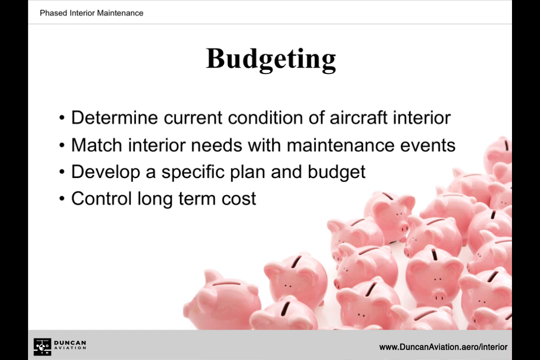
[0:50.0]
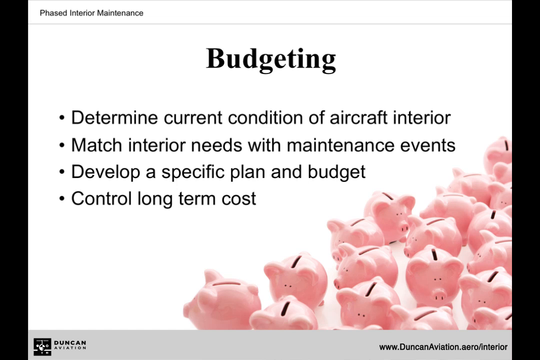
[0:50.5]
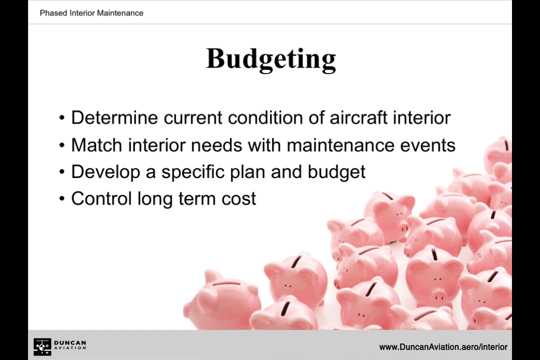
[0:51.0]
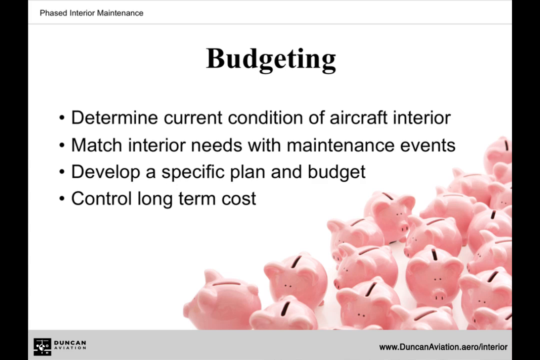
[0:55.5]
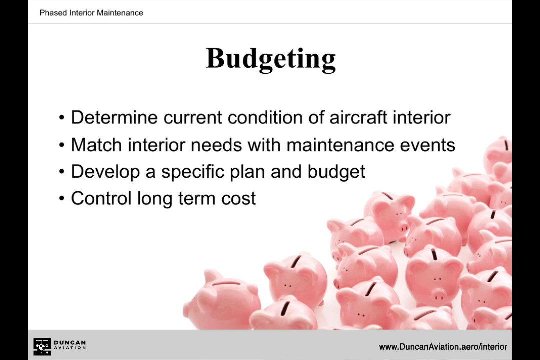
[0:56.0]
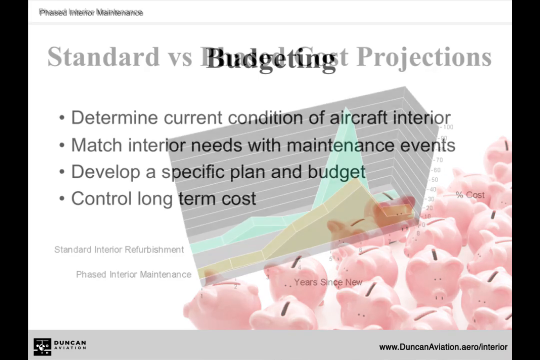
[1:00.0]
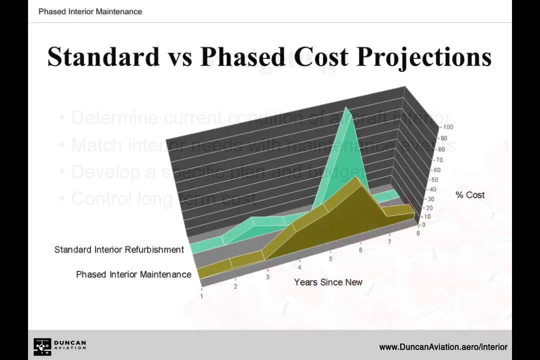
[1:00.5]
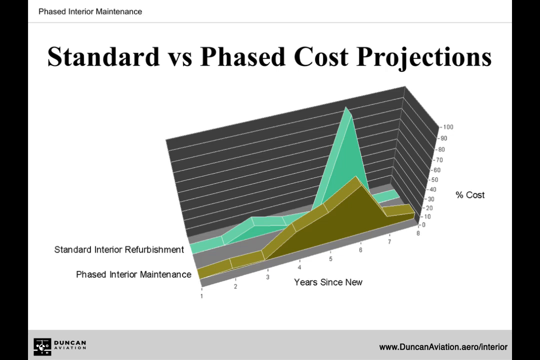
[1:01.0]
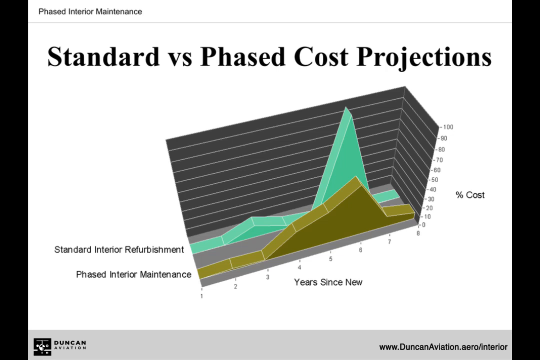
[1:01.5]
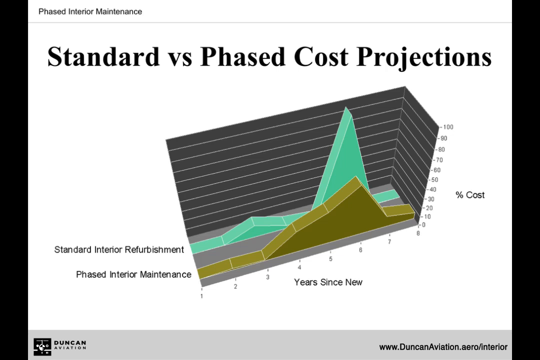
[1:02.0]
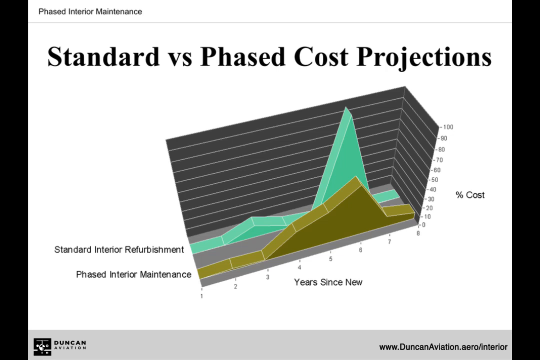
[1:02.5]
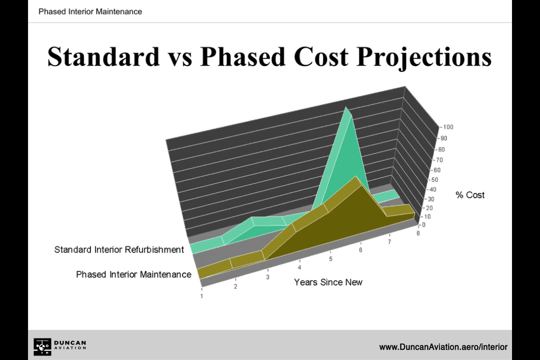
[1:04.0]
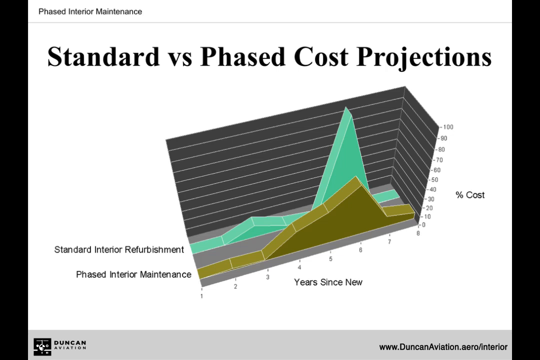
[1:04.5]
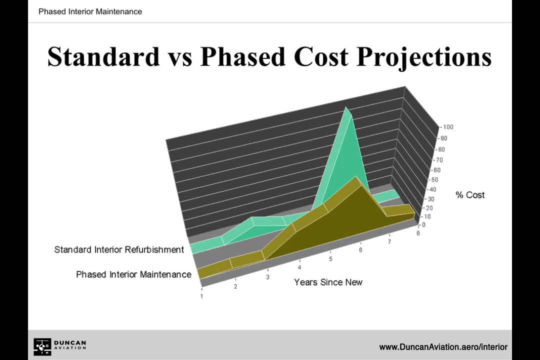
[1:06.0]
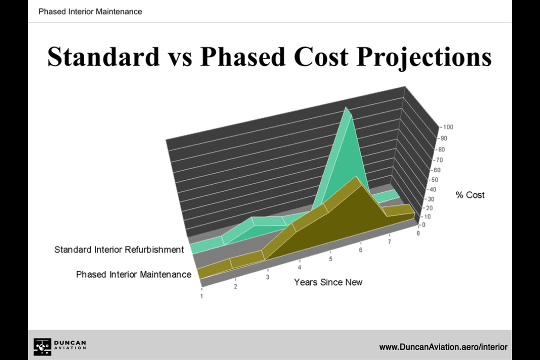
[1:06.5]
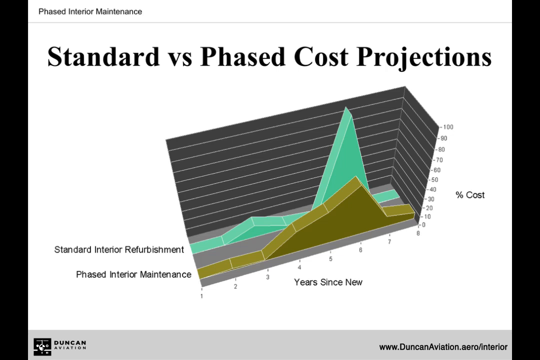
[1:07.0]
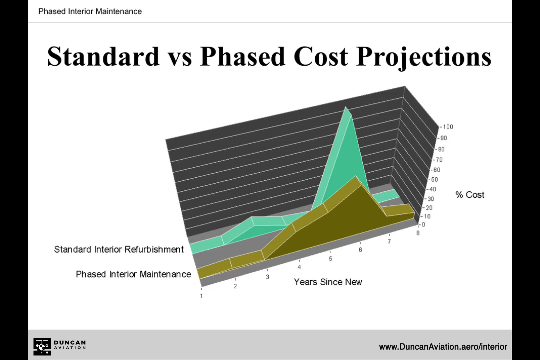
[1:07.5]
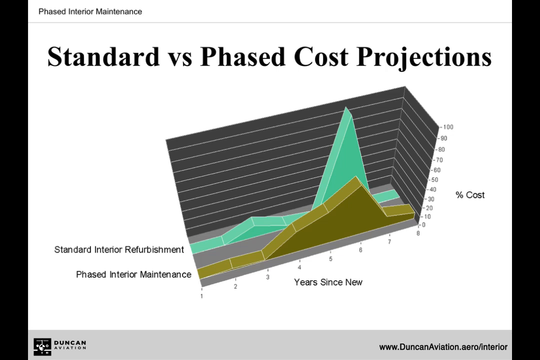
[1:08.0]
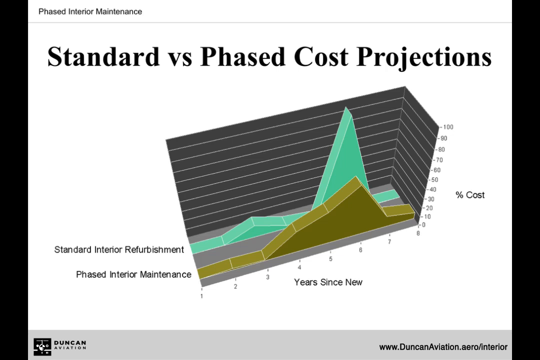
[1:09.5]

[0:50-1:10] A page has the title "budgeting" in the middle in black bold print on a white background, with four bullet points also in the middle: "determine current condition of aircraft interior," "match interior needs with maintenance events," "develop a special plan and budget" and "control long-term cost." A whole bunch of small piggy banks are in the area, all pink, each with a dark slit where money could go. The next page then comes up, reading "standard versus phased cost projections." It has a graph with a gray background with lines and shapes drawn almost like mountains, in a light green color and a yellowish green color. The words "standard interior refurbishment" and "phased interior maintenance" appear, and along the bottom it says "year since new," running from one up to eight. The percentage of the cost starts at zero percent and goes in increments of 10 up to 100. A website is in the lower right-hand corner.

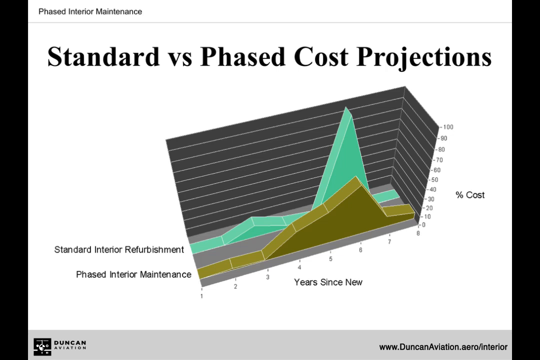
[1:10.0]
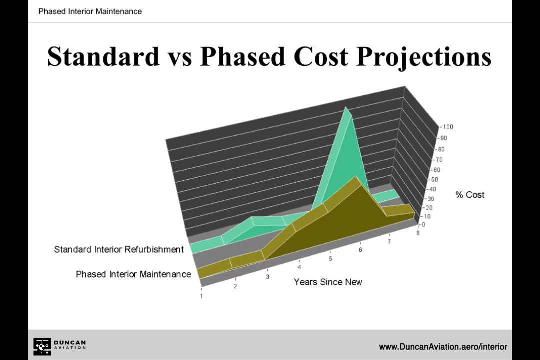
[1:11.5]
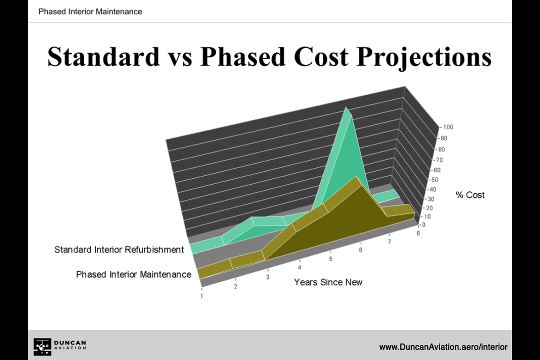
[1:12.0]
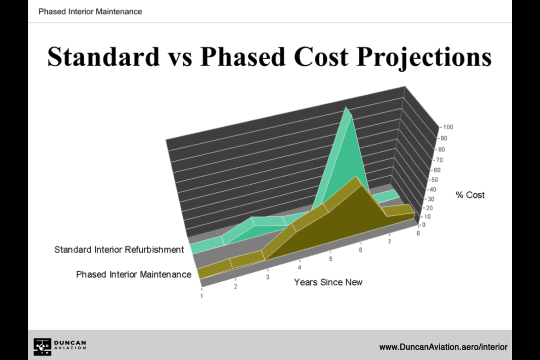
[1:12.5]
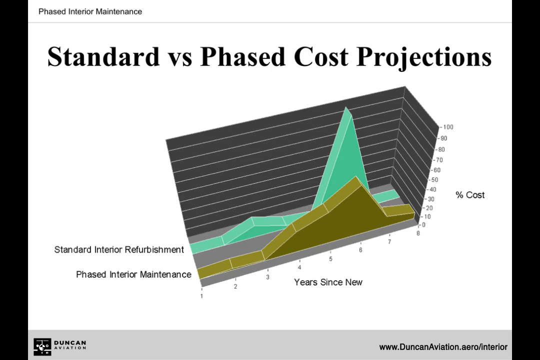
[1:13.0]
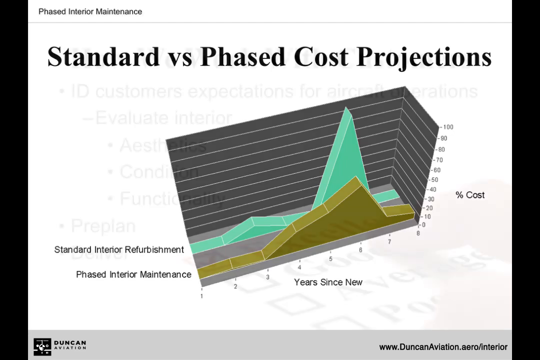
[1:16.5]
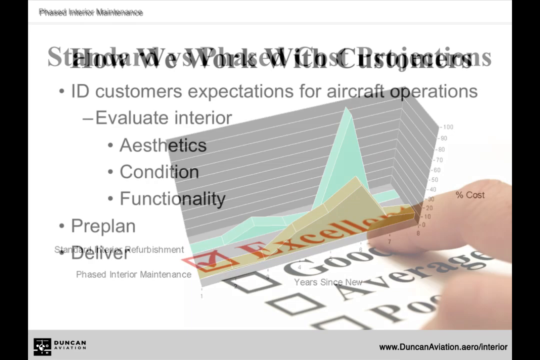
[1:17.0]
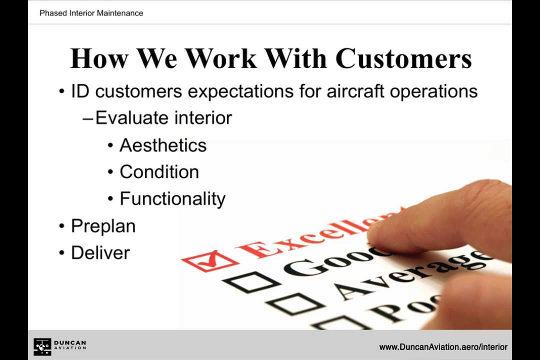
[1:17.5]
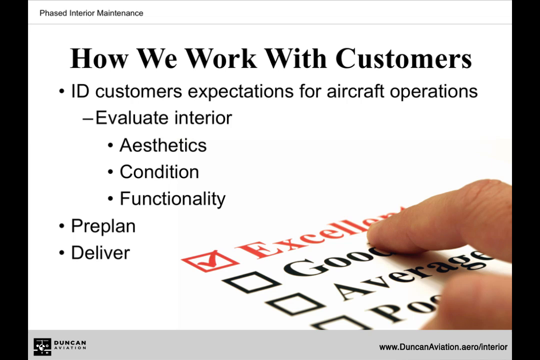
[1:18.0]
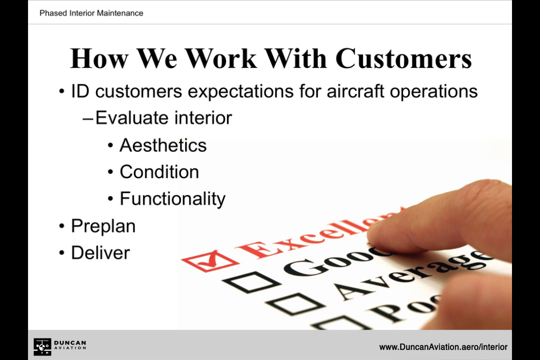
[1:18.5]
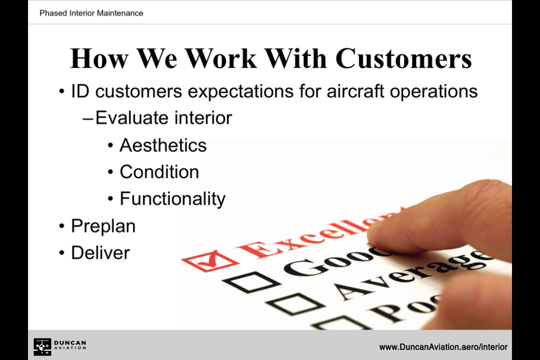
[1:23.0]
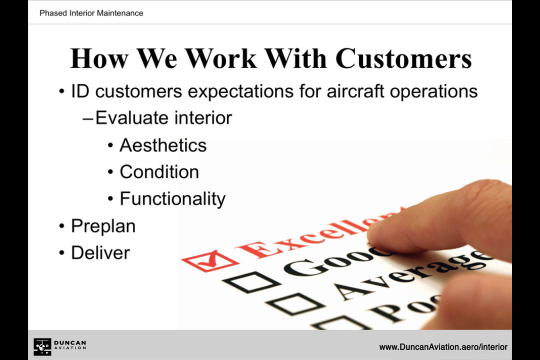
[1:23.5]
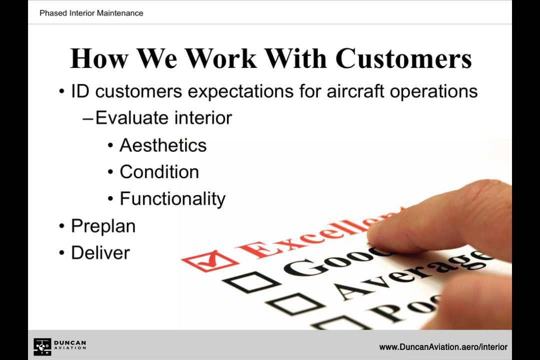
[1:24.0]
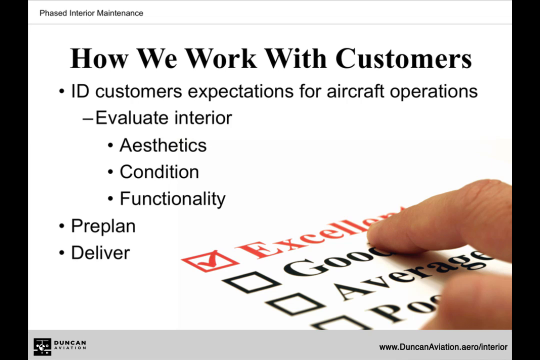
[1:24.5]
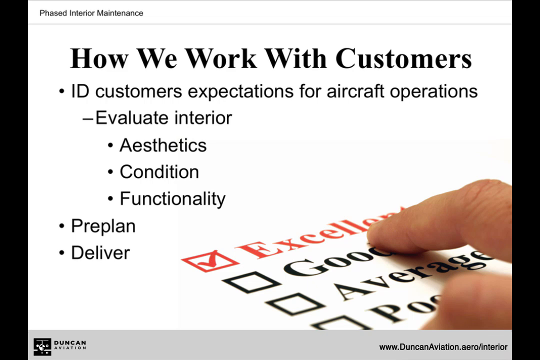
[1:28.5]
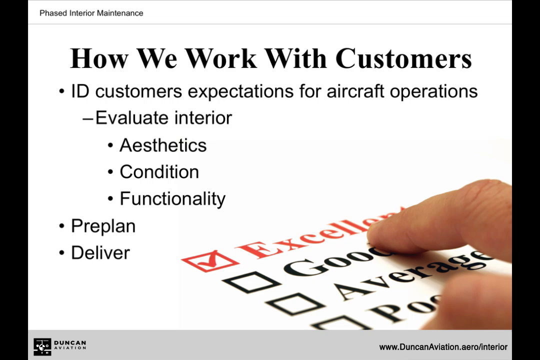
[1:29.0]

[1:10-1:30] A graph is titled at the top "standard versus phased cost projections." It is made to look like a three-dimensional graph, with a black background and white lines running through it. Up the right side it has "percentage cost," starting at zero and rising by 10 per line up to 100, and across the bottom it says "years since new," from one up to eight. A light green area says "standard interior refurbishment," and a yellowish green area says "phased interior maintenance." The next page pops up with "how we work with customers" in bold print at the top. Underneath are three bullet points. The first says "ID customers' expectations for aircraft operations," with a hyphen under it reading "evaluate interior," and under that three bullet points reading "aesthetics," "condition" and "functionality." Back at the regular bullet points, one says "pre-plan" and the bottom one says "deliver." A finger on the page points to the word "excellent," which has a red check in a red box; the words "good," "average" and "poor" are also there.